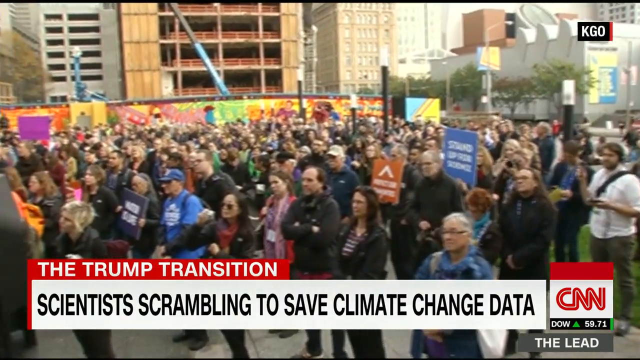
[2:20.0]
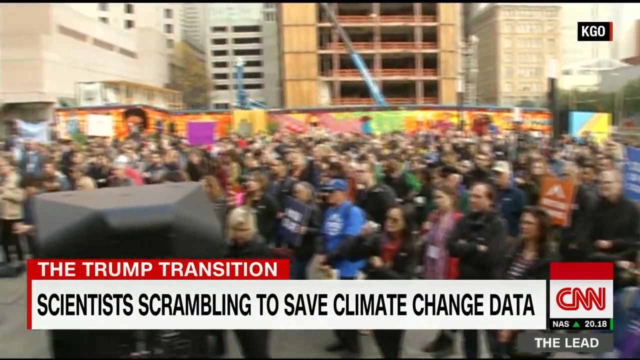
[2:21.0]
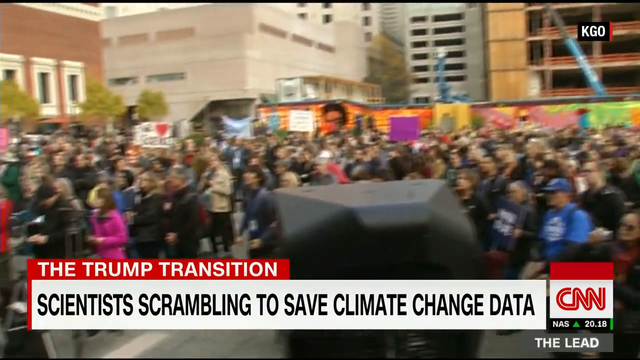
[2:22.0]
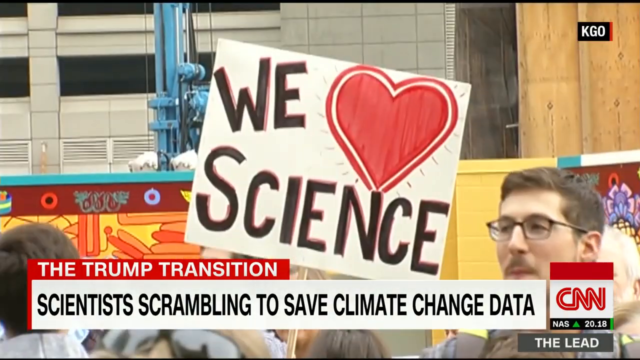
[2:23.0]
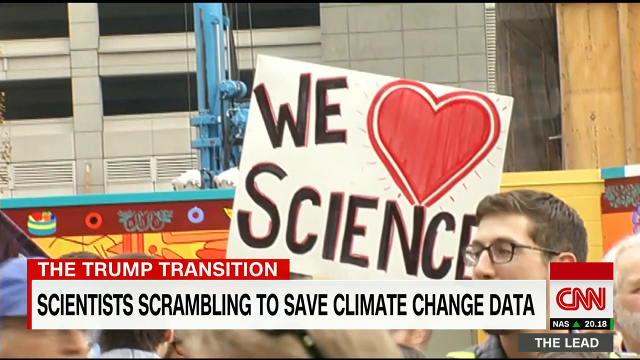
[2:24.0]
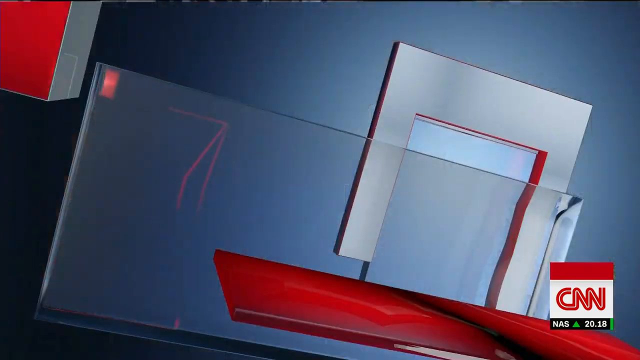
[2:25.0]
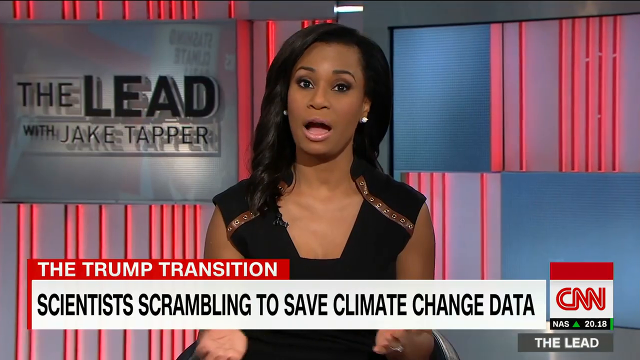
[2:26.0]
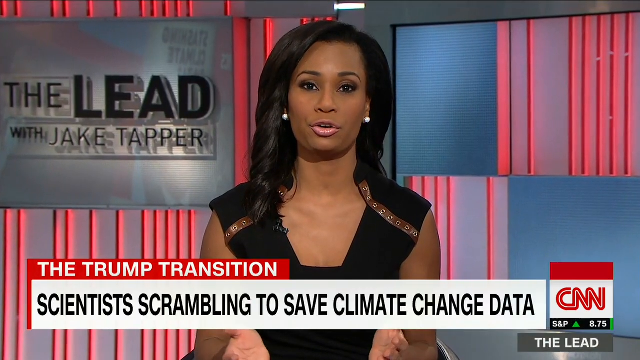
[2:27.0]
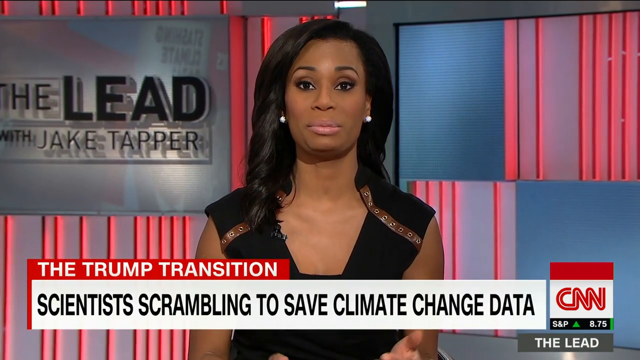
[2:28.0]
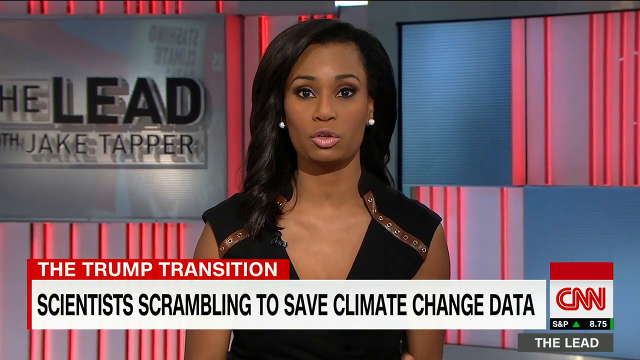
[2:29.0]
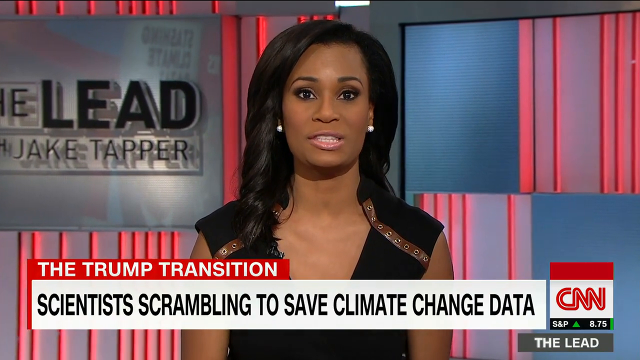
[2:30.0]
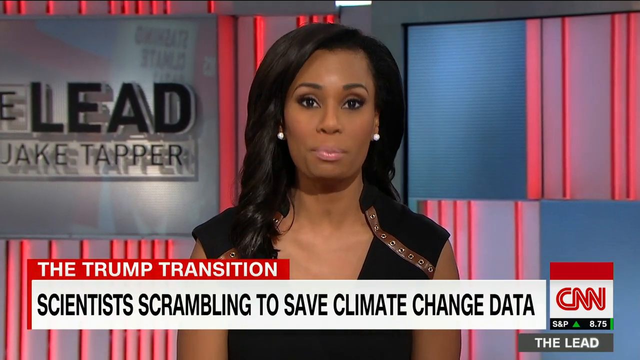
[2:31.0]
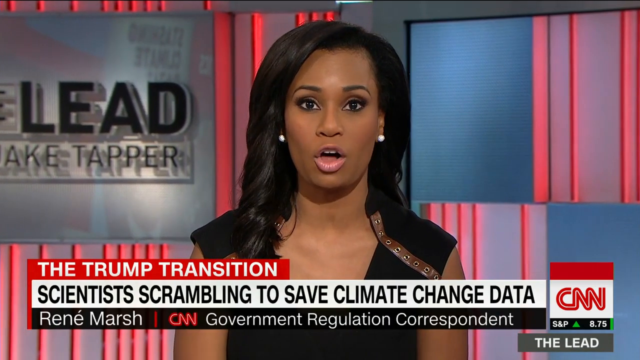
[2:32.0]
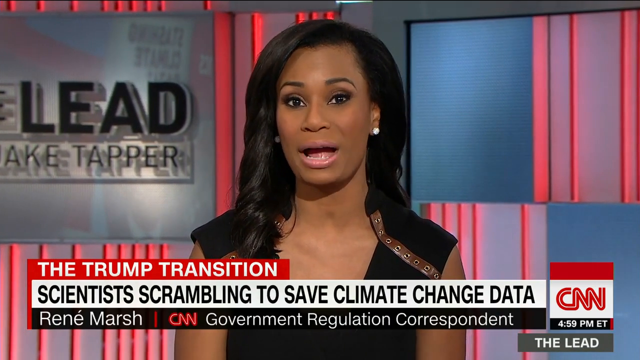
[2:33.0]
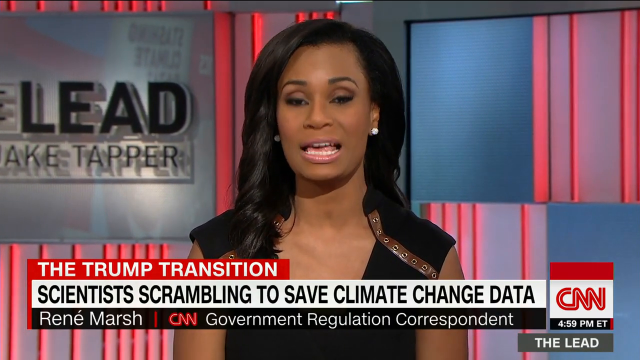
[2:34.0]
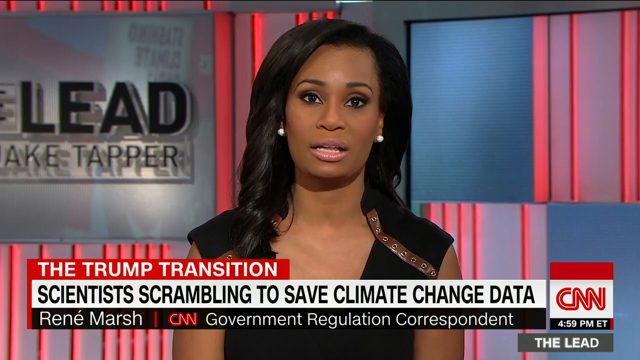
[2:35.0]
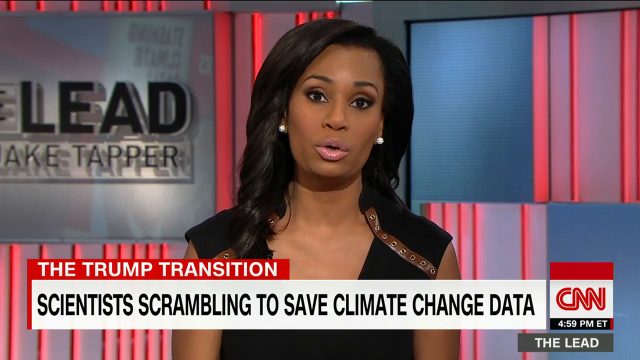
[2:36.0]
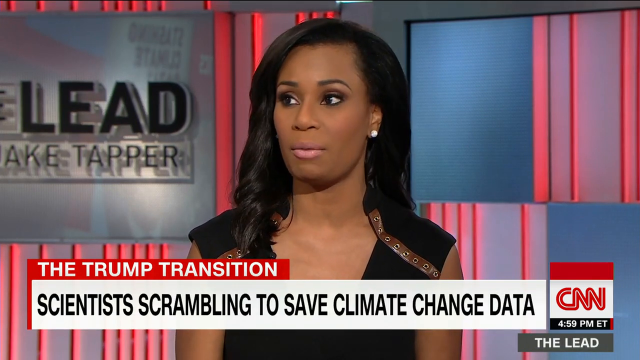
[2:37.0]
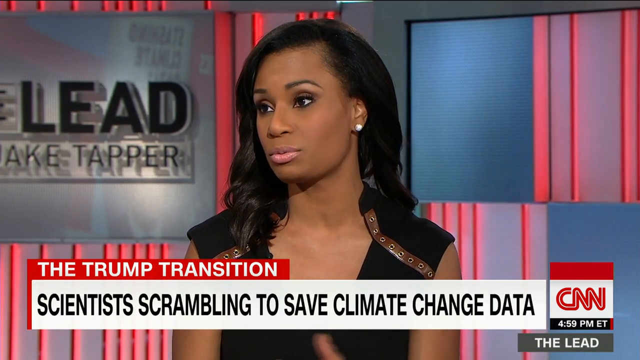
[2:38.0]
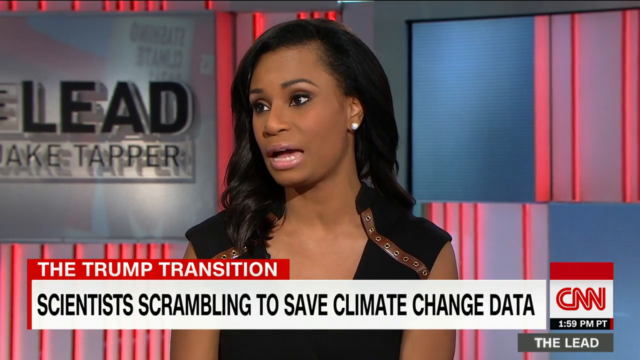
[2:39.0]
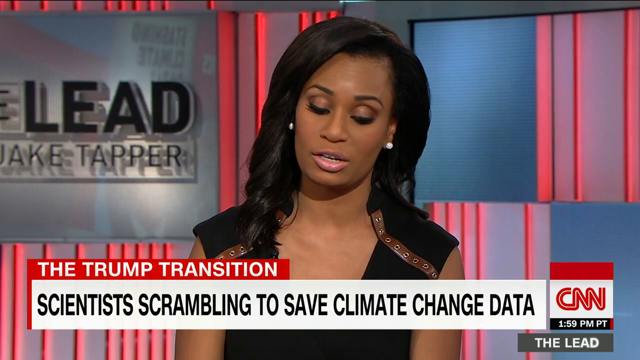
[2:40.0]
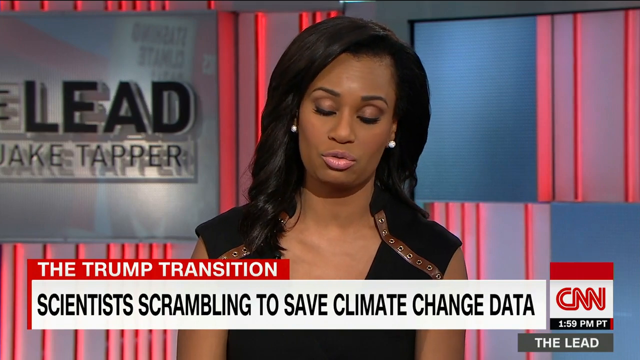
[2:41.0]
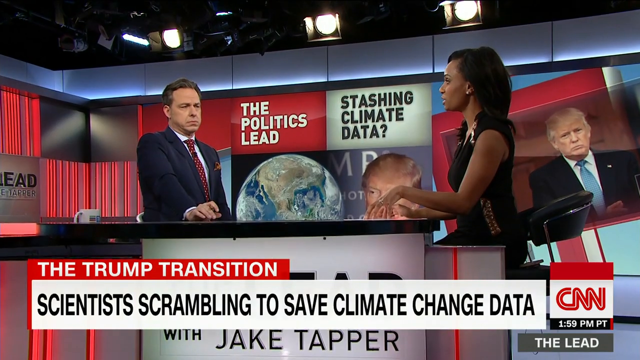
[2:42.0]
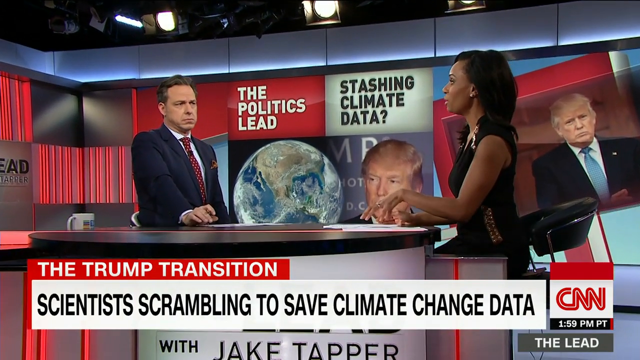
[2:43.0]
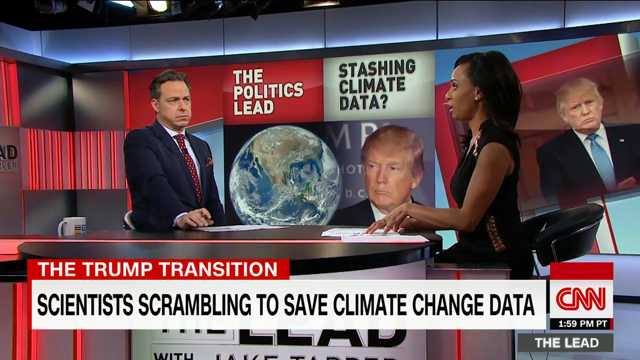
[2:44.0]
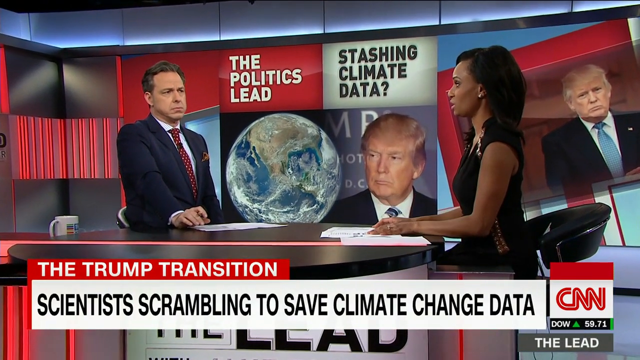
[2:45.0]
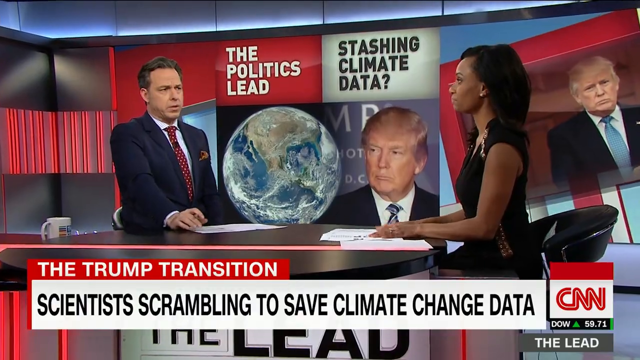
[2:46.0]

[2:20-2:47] A close-up shows the people holding a sign reading "We love science," followed by more signs from the scientists. The video cuts to another segment with the text "The Lead with Jack Tapper." A Black woman who looks to be in her 30s, in a sleeveless dress, is in front of a background of geometric shapes with neon red lights. As she talks, the bottom scroller changes to "CNN Government Regulation Correspondent." She looks at the camera, then off to the side to address somebody. The guest at the table with her is shown; in the background a sign reads "The Politics Lead" and "slashing climate change data," with an image of a globe and a picture of President Trump. The man sitting next to her at the curved desk is a middle-aged white man with brown hair in a navy suit. Her name is Renee Marsh.